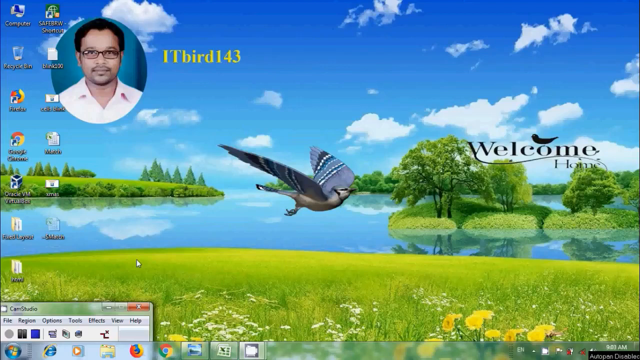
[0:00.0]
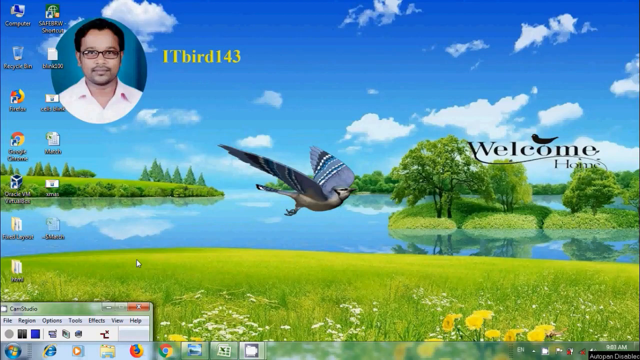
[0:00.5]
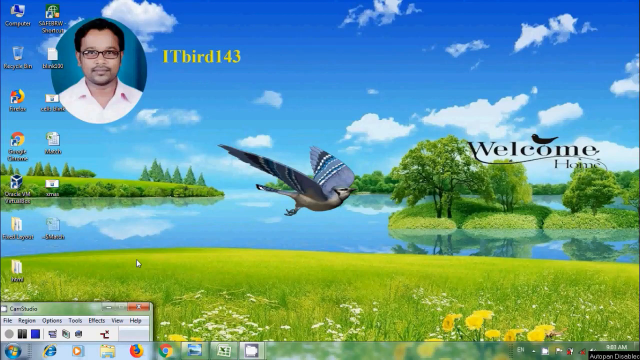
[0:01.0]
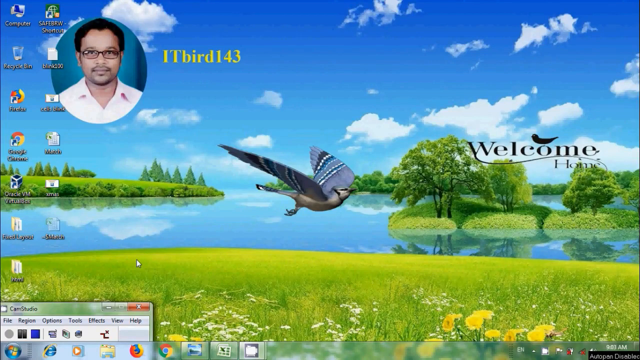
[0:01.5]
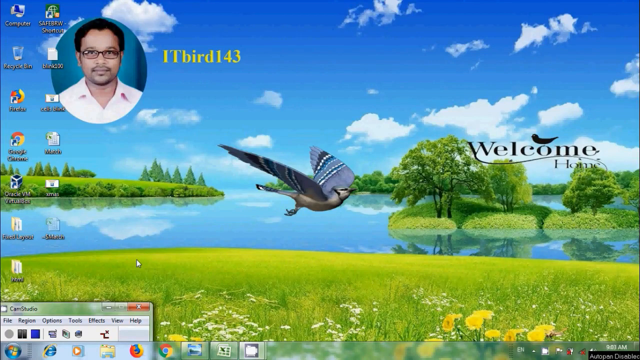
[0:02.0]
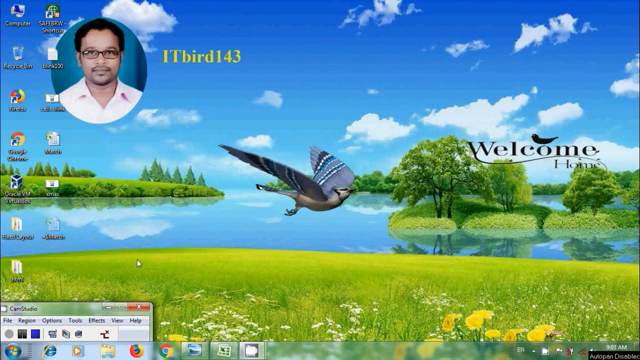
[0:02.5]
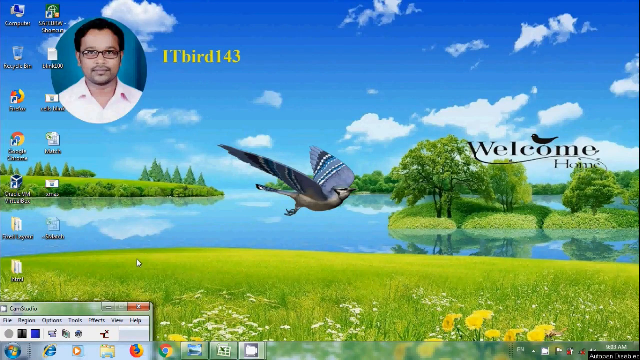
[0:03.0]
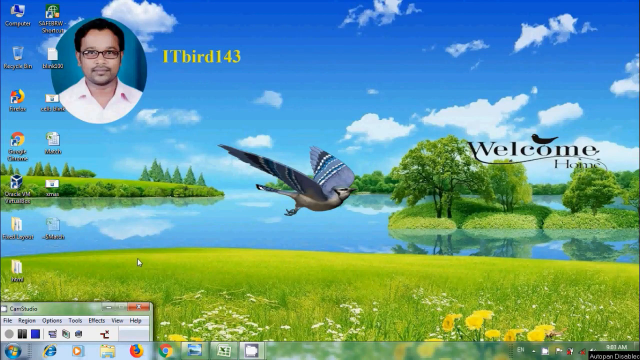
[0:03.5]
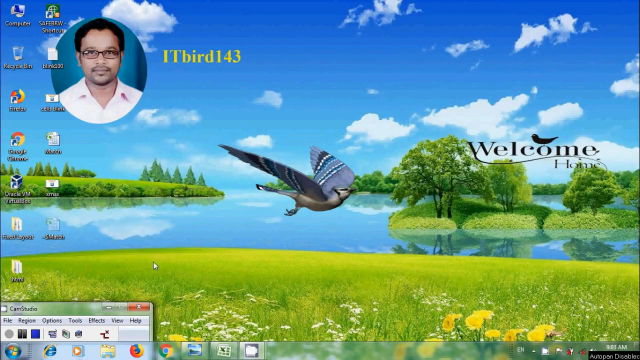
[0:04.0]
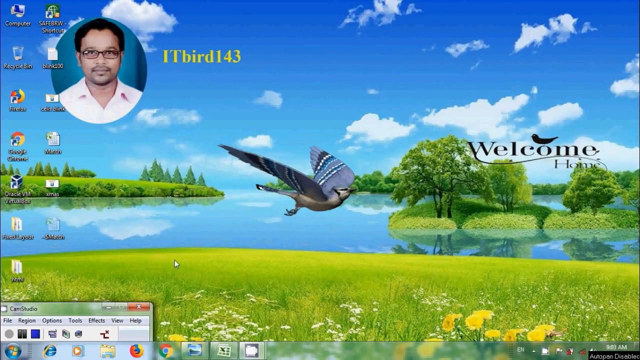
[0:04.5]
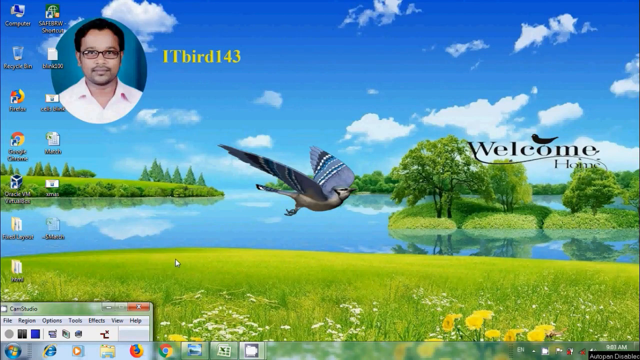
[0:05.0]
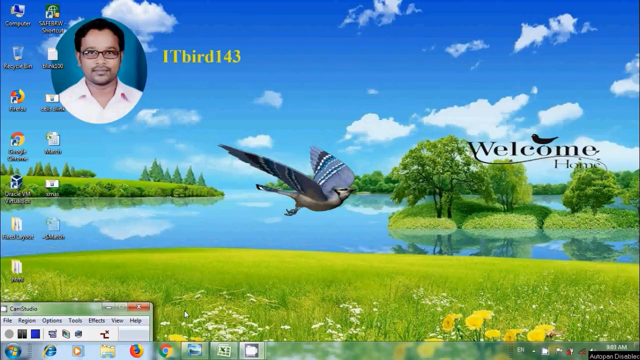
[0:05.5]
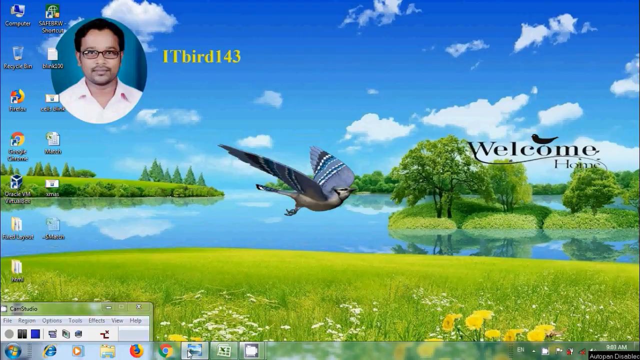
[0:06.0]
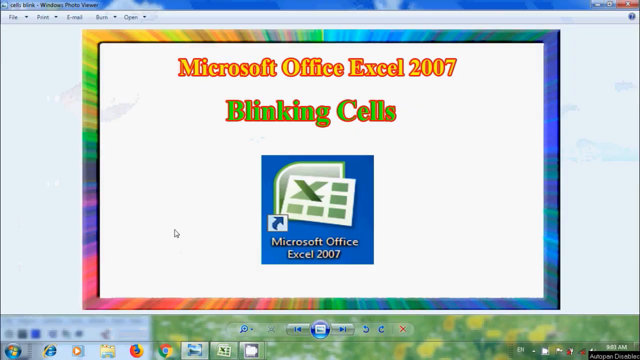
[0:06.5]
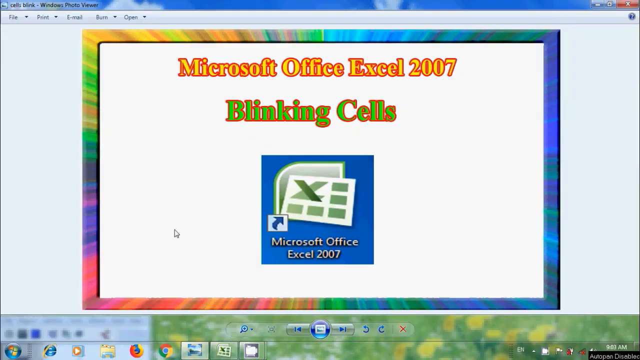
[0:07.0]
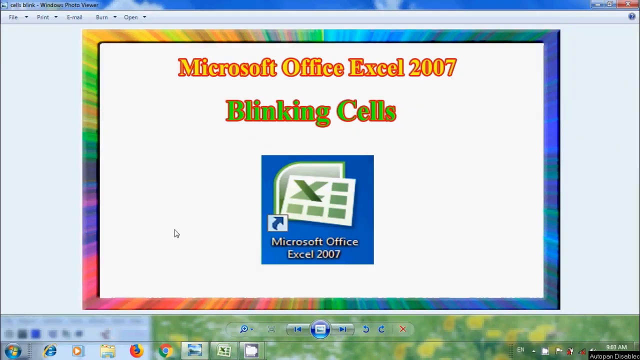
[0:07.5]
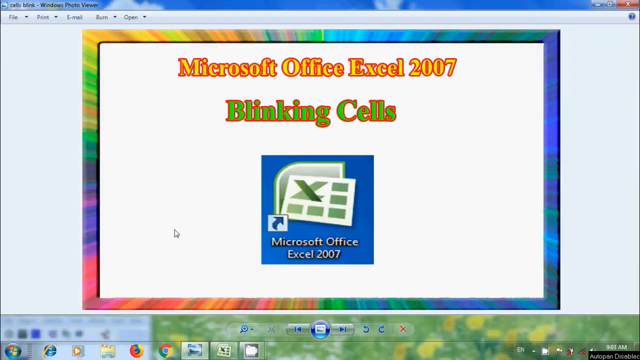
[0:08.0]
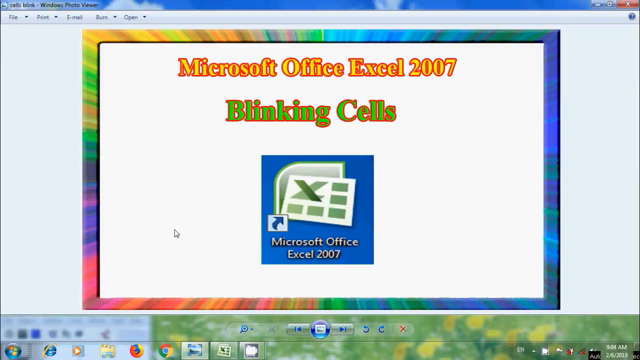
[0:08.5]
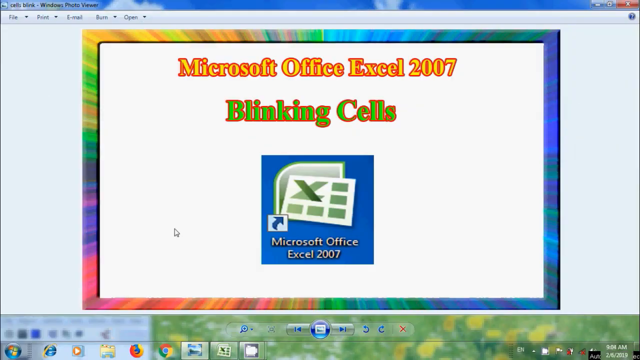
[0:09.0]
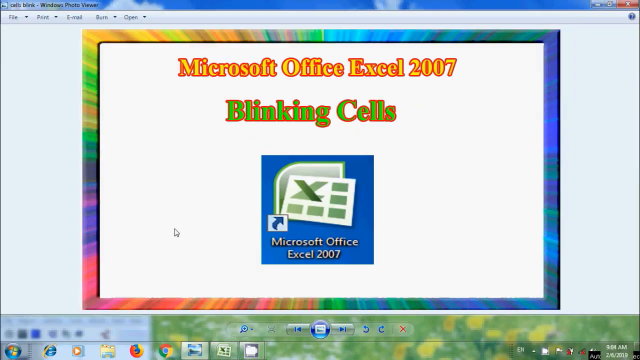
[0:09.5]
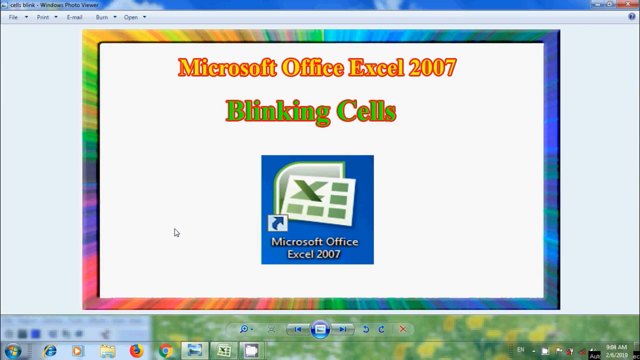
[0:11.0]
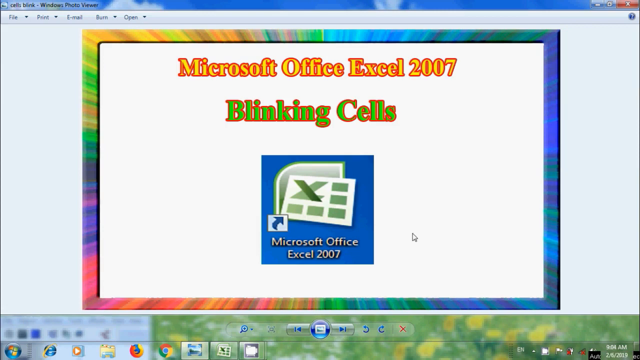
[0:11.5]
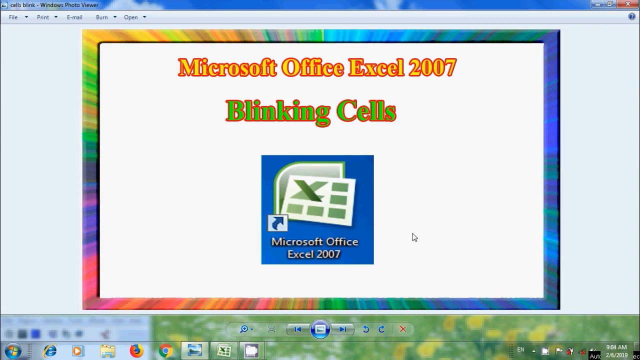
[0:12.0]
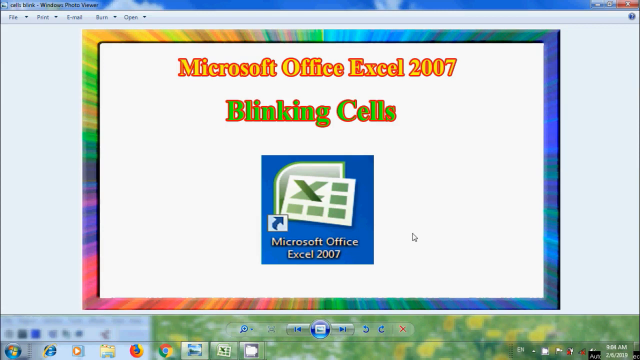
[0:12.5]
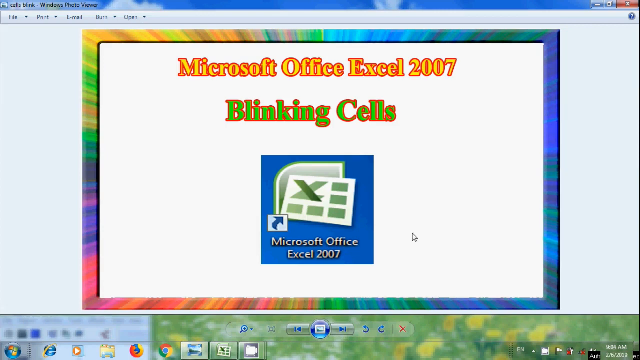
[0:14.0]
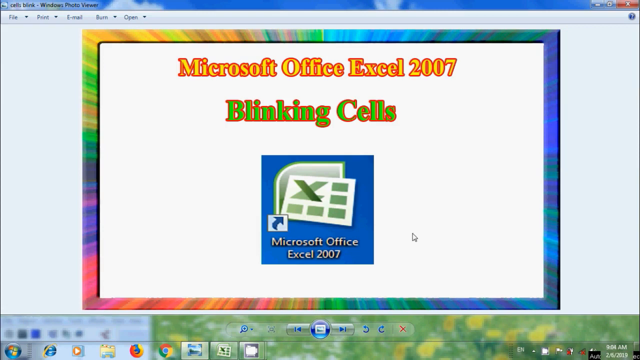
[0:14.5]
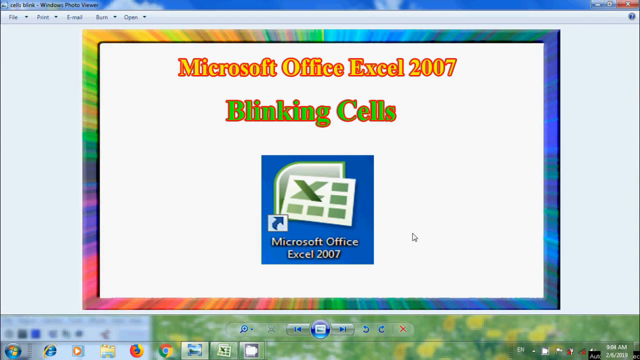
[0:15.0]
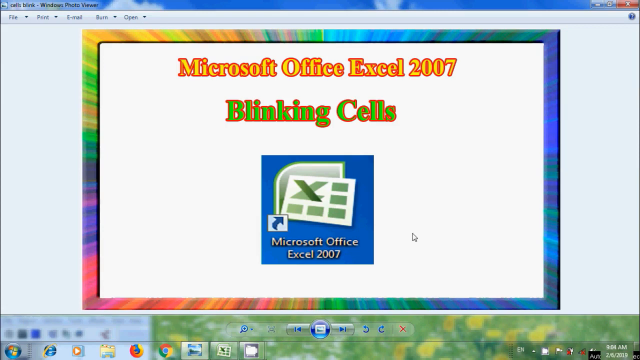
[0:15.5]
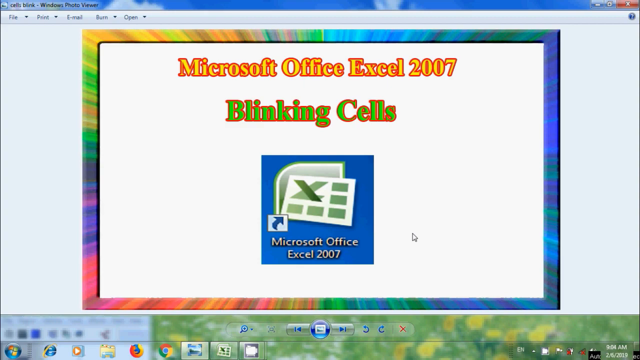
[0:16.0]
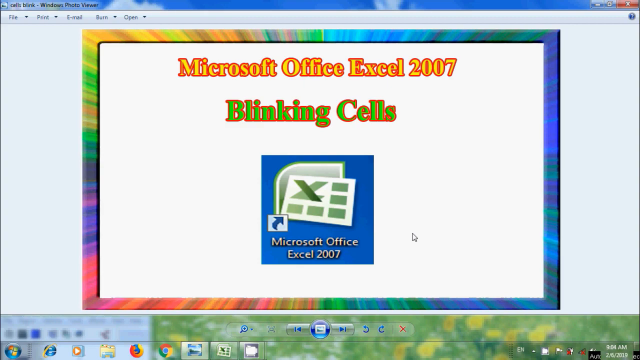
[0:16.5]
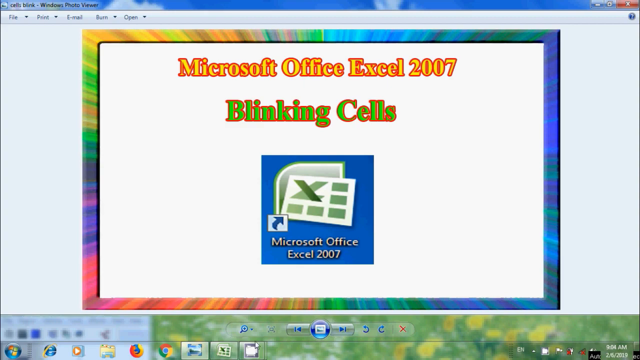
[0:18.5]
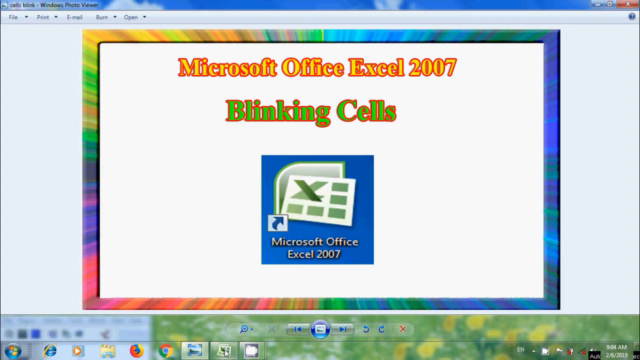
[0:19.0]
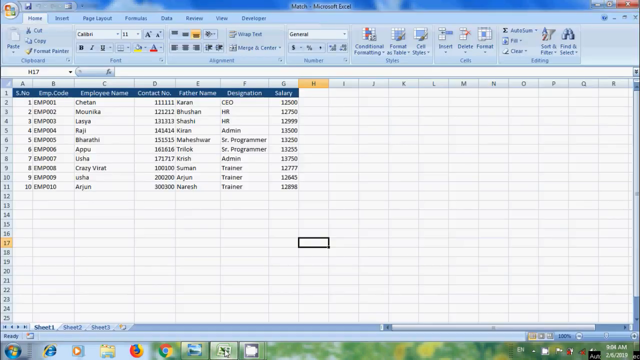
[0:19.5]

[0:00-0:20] A desktop background shows a picture of a guy, and close to the guy is written "ITBird143". There is a welcome home sign on the desktop. The scene seems to be a riverside, with green grass, green leaves, sky and clouds, a green environment. The video seems to be a tutorial on Microsoft Excel. He opens Microsoft Excel 2007 blinking cells, and there seems to be a rainbow of colors in a rectangular shape around Microsoft Office Excel 2007.